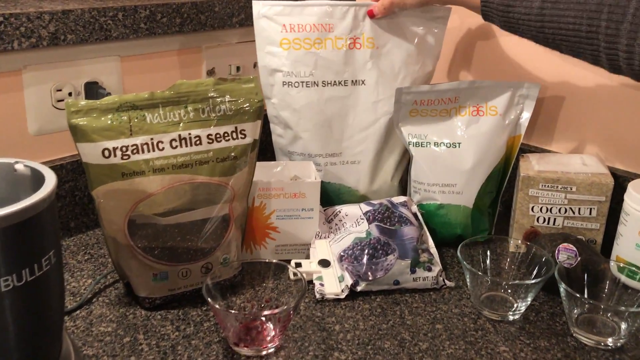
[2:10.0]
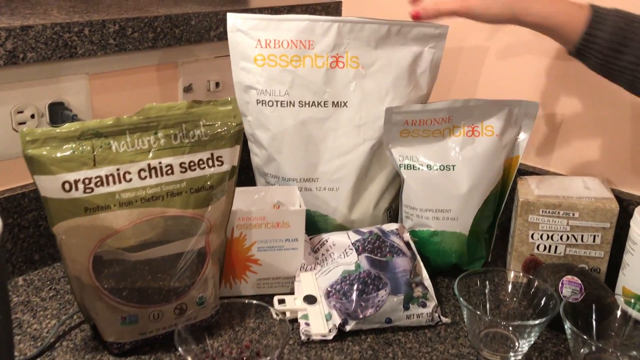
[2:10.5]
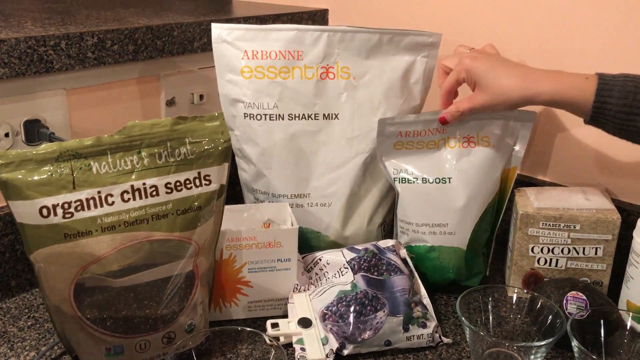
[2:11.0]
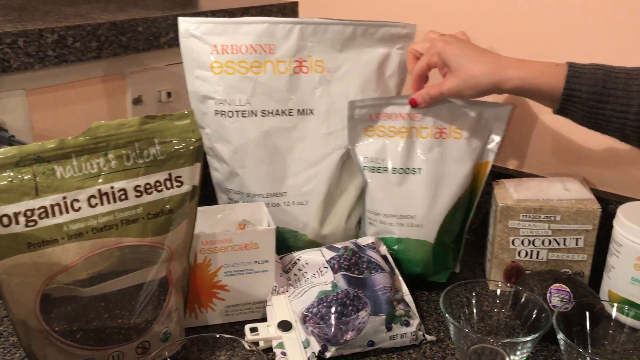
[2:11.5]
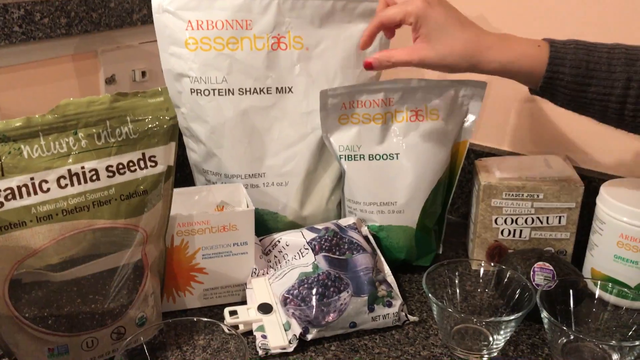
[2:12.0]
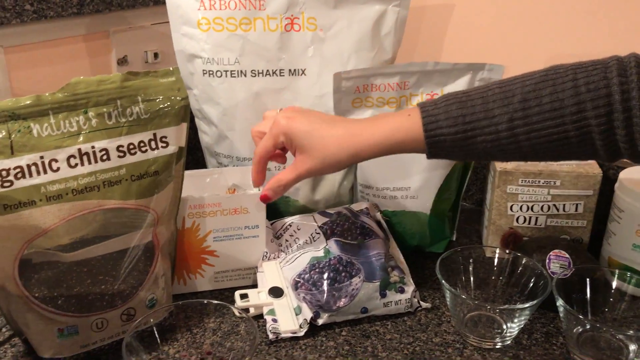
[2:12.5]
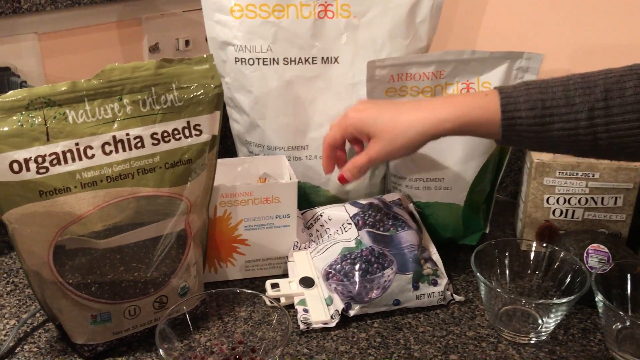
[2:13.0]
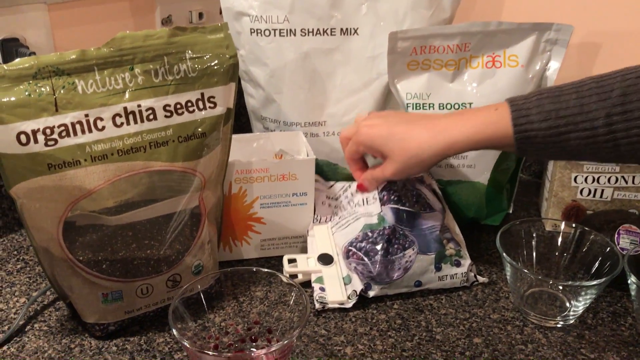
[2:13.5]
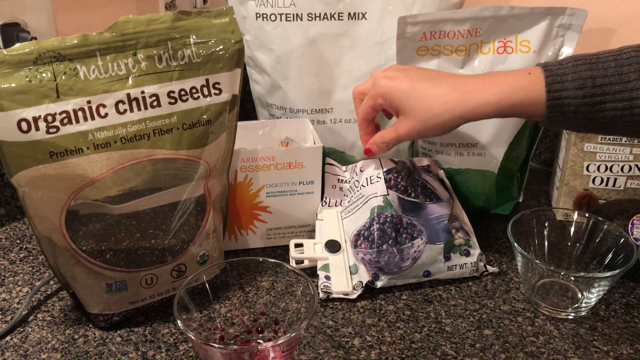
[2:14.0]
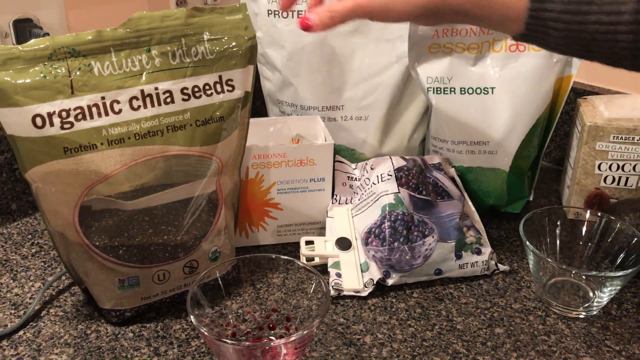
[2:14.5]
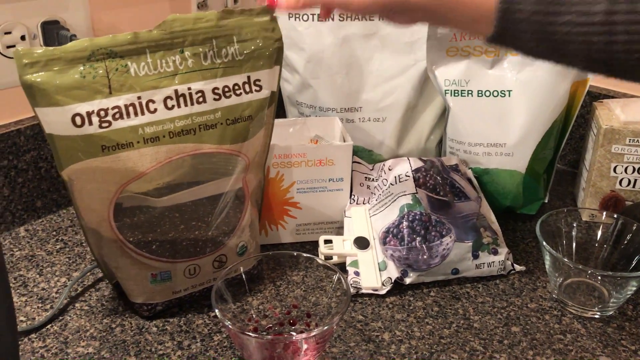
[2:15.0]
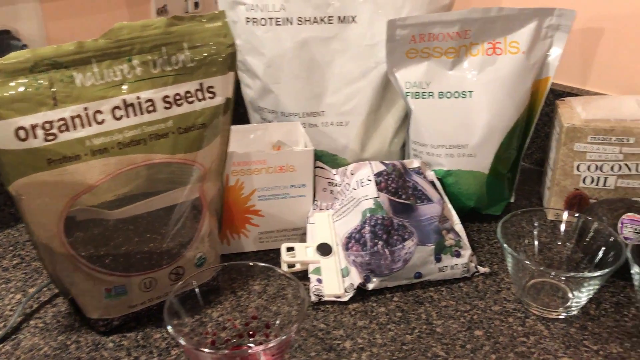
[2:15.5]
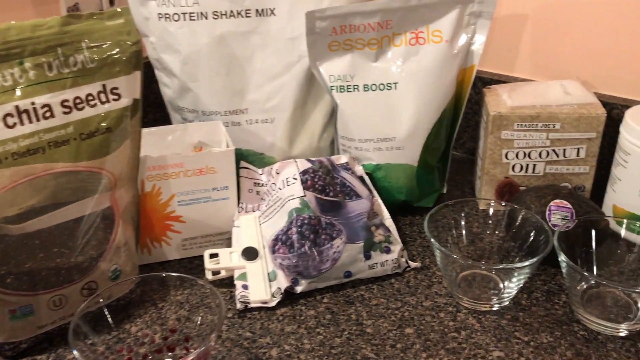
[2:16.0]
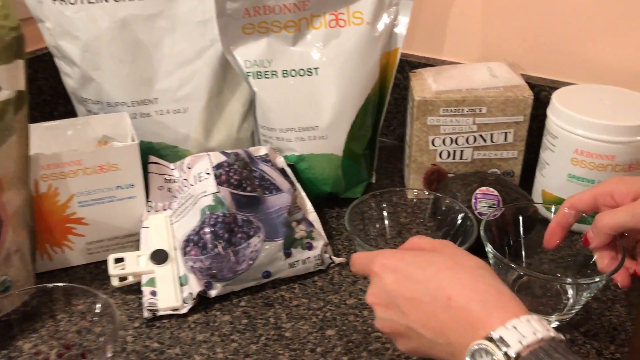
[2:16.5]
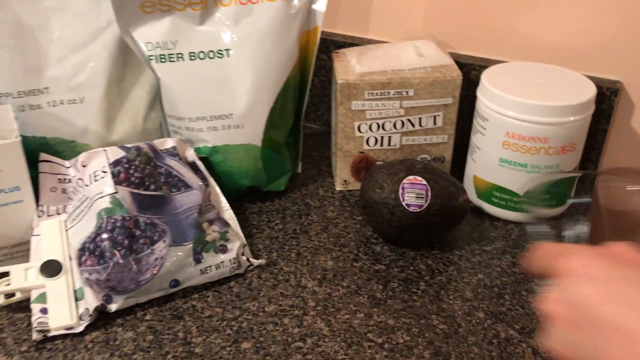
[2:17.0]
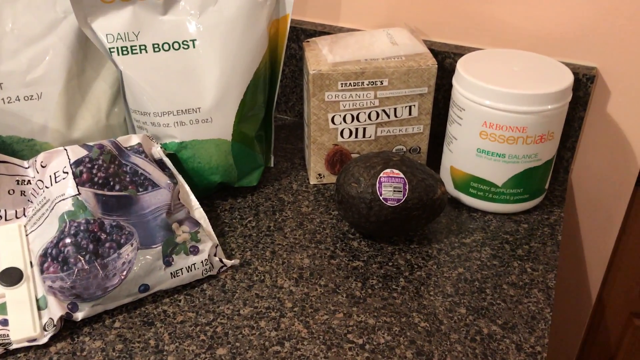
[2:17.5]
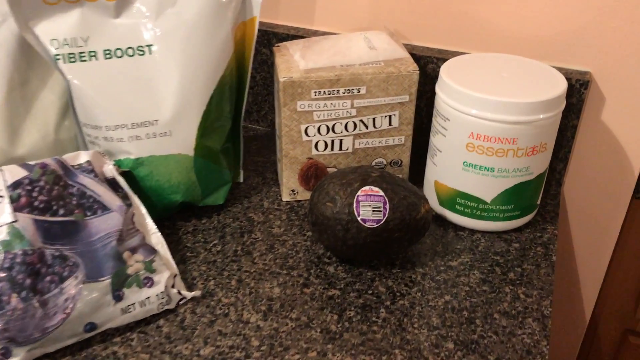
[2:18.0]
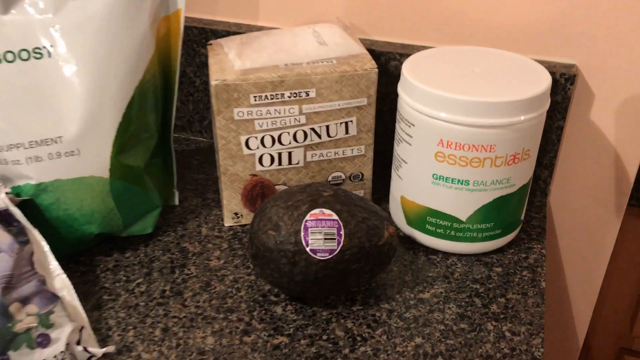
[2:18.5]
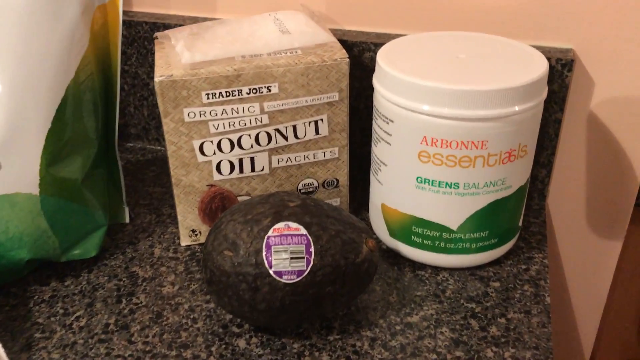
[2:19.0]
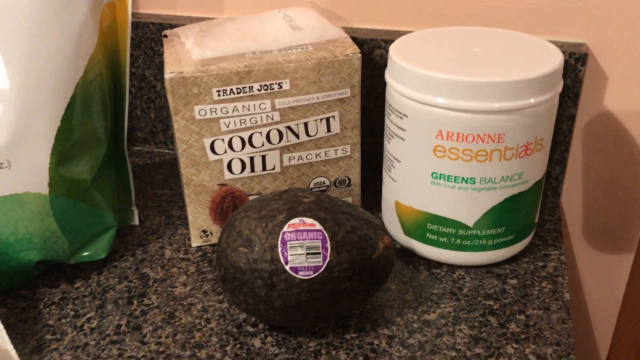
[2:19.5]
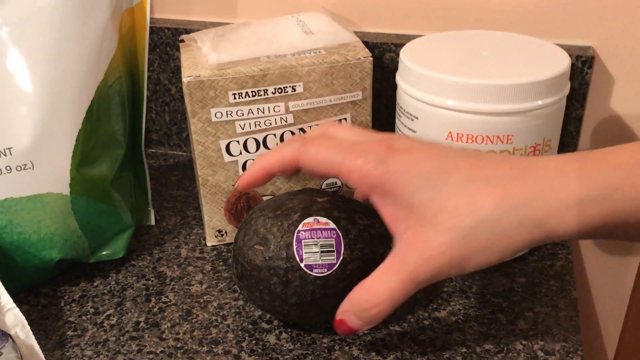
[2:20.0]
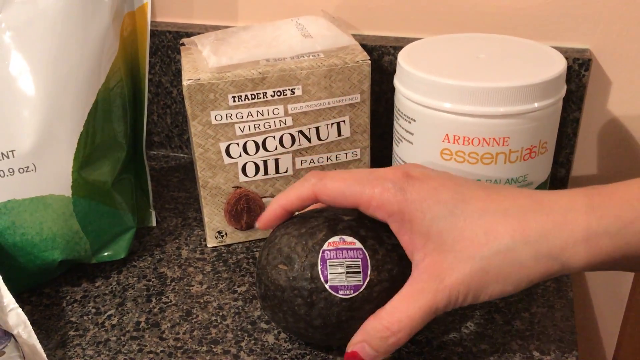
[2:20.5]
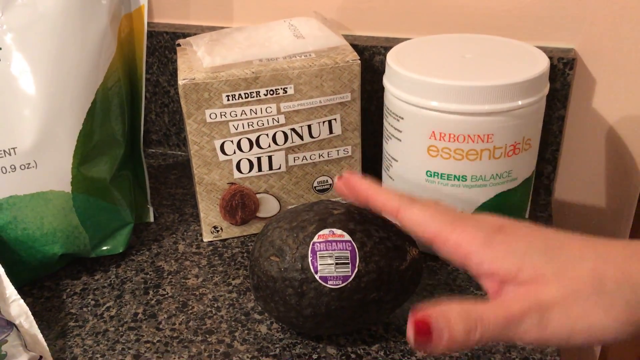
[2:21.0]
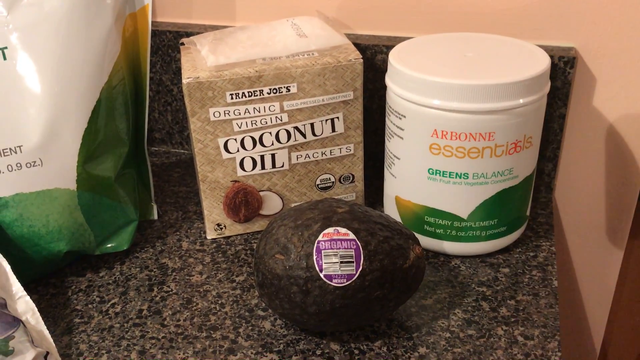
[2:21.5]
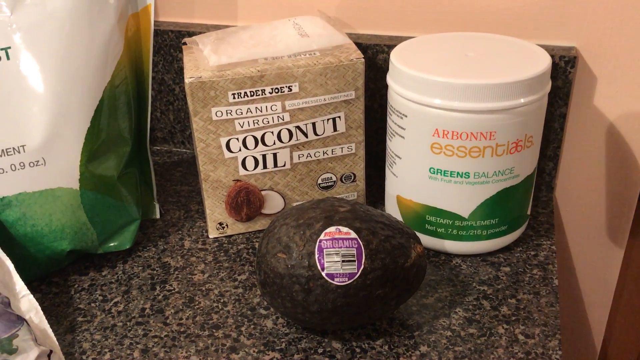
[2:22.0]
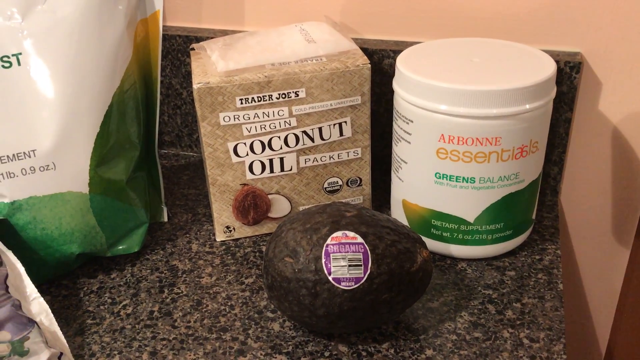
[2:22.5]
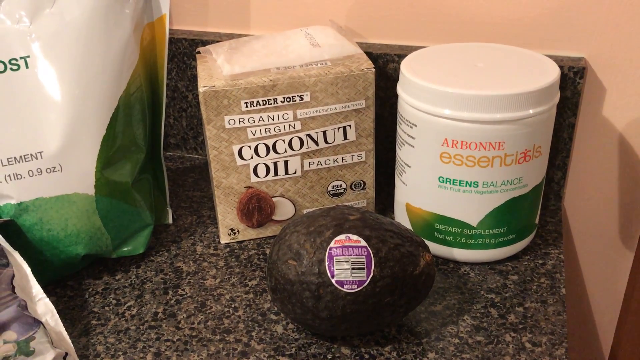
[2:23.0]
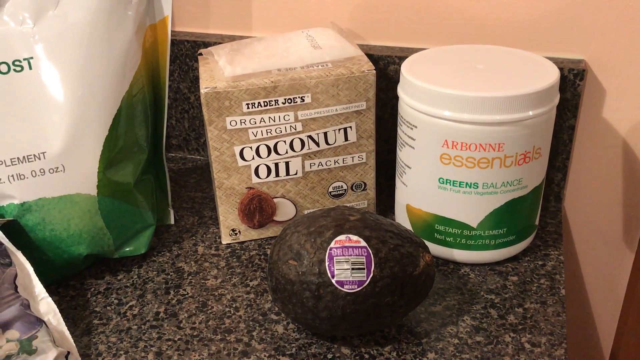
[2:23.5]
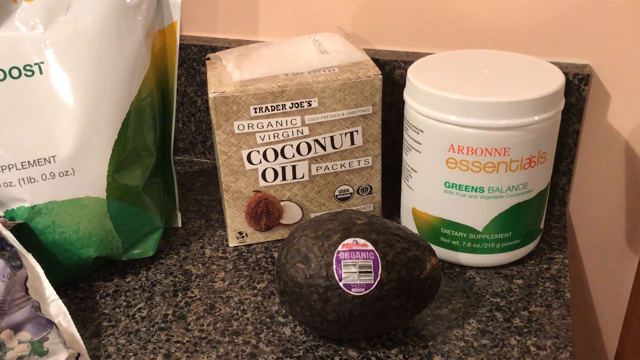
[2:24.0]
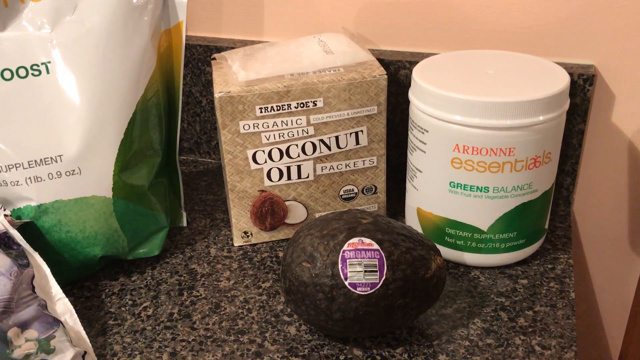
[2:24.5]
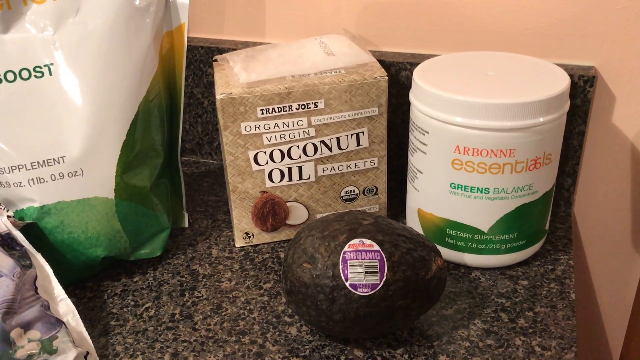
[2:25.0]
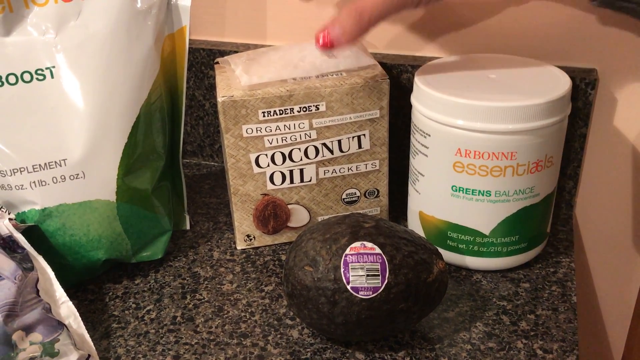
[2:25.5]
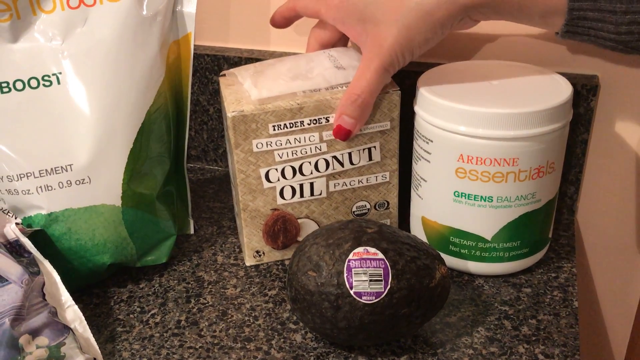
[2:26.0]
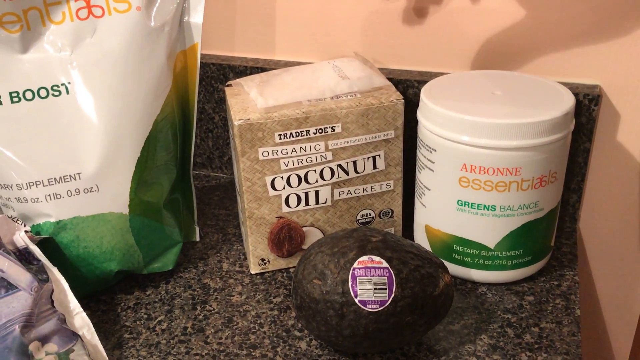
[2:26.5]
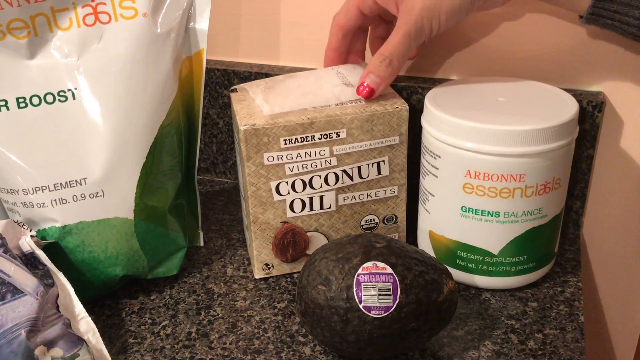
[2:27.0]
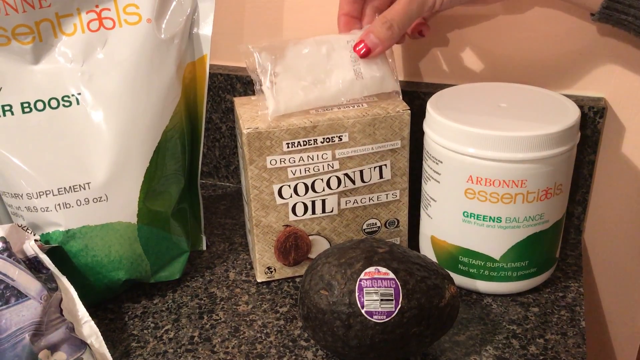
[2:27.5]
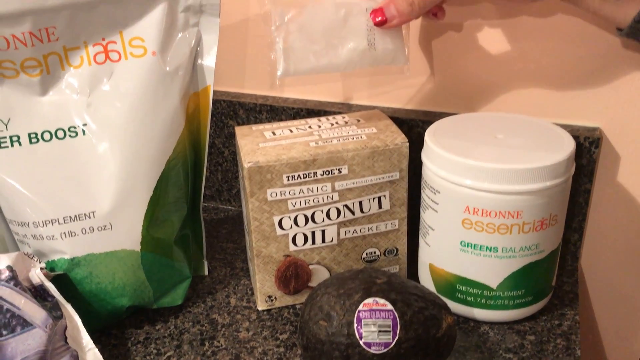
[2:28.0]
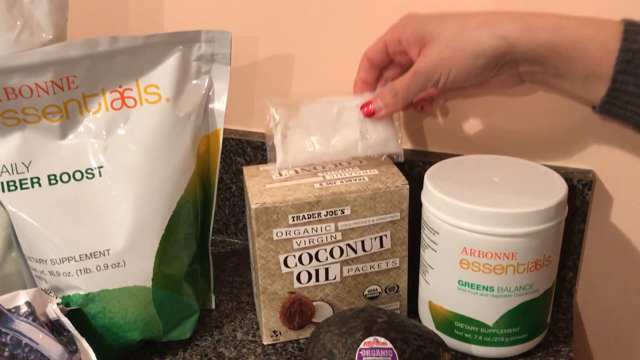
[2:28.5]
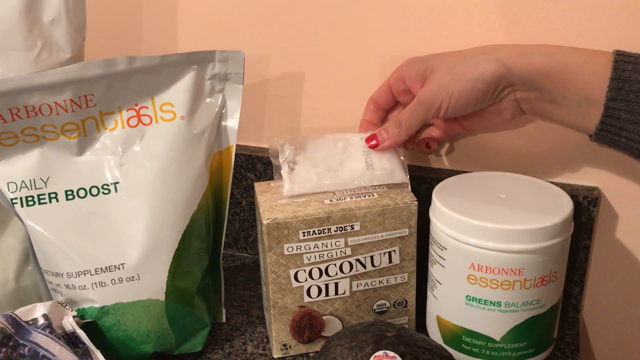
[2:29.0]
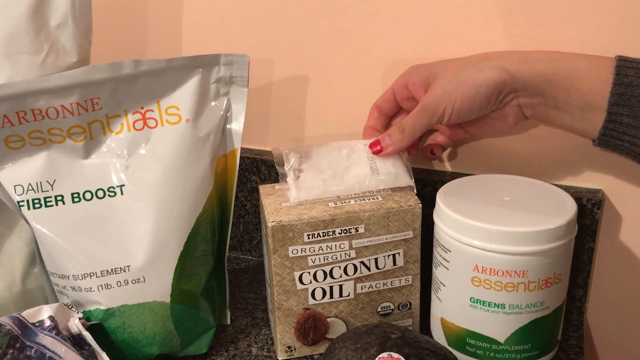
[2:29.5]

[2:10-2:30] The woman shows all the ingredients she used one by one, closer to the camera, pointing at or lifting the sachets so the names can be clearly seen. She shows the "protein shake mix", followed by the "fiber boost", and the "organic chia seeds" are also visible. She shows the fruits, though their type cannot be clearly seen. She removes the glass bowls from the cupboard, revealing the avocado there and the coconut oil packets in a box, with one packet on top of the box; the box reads "organic virgin coconut oil". There is also greens balance, and most of the products are from Urban Essentials.